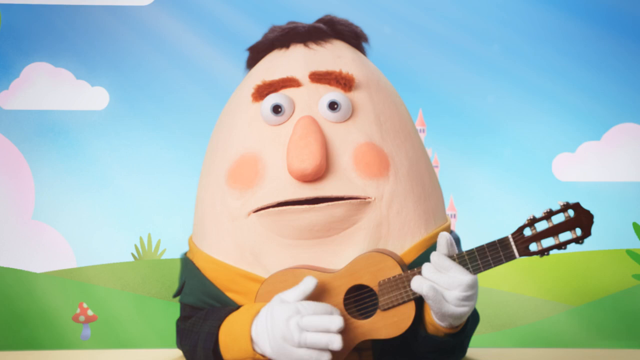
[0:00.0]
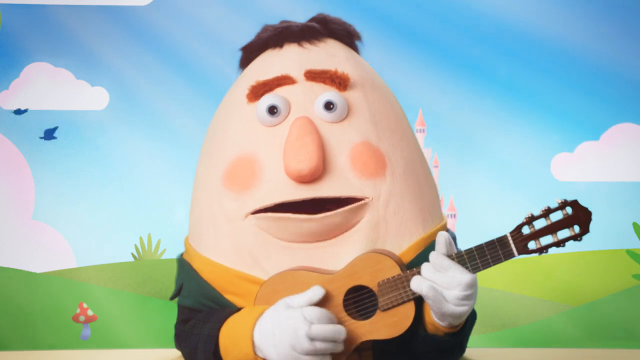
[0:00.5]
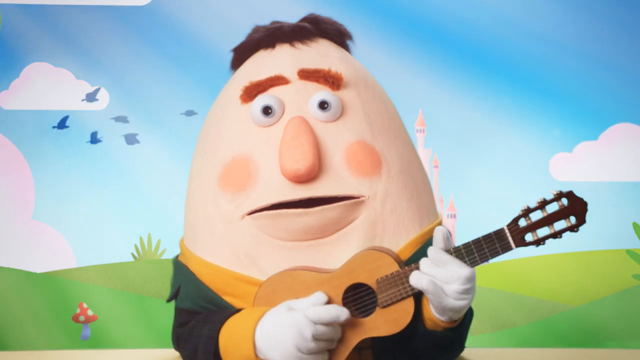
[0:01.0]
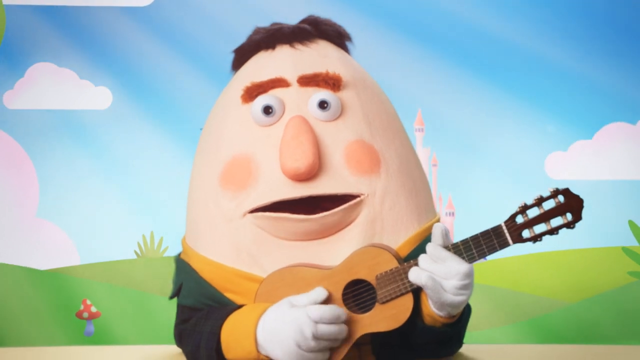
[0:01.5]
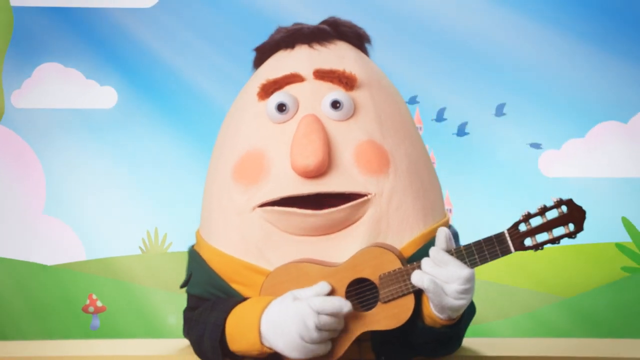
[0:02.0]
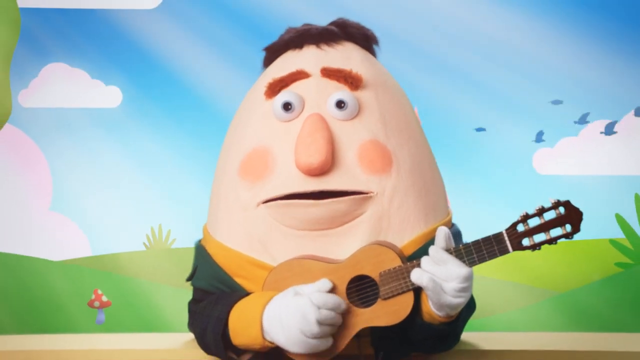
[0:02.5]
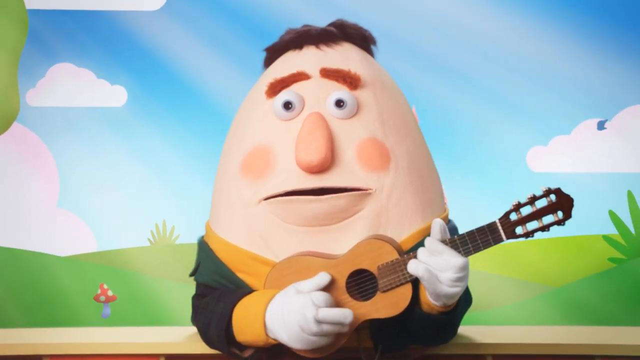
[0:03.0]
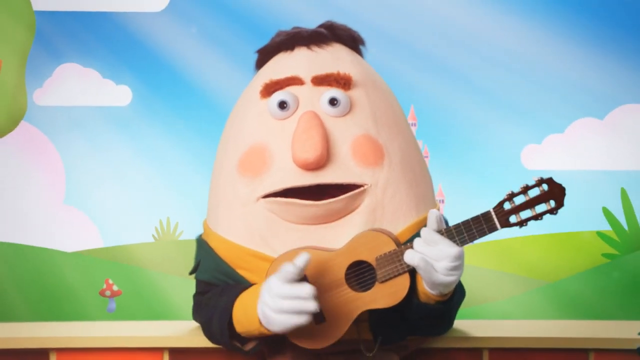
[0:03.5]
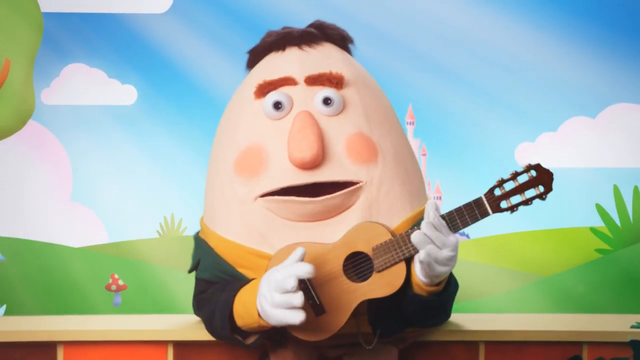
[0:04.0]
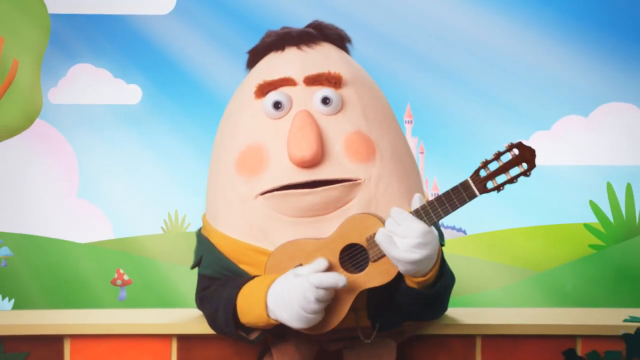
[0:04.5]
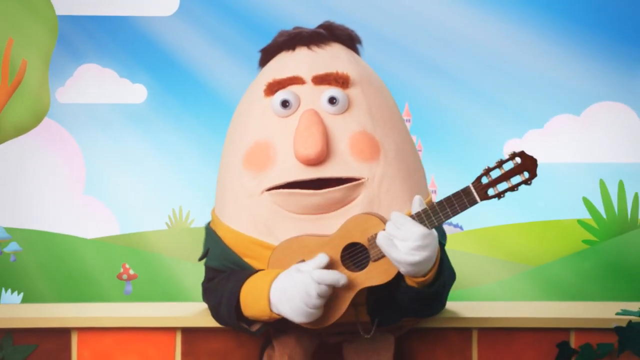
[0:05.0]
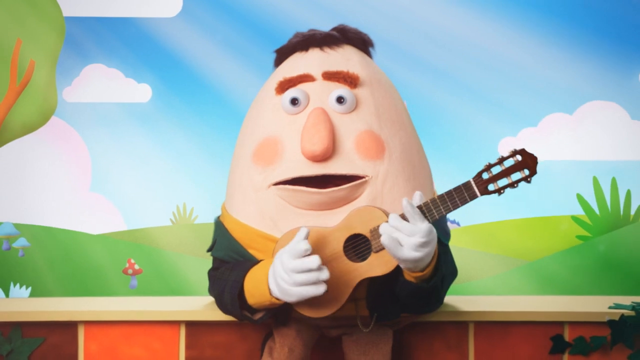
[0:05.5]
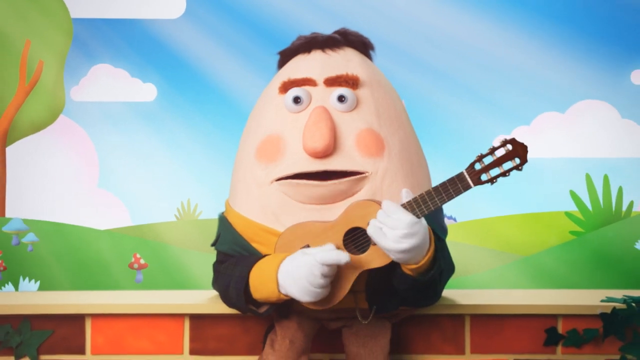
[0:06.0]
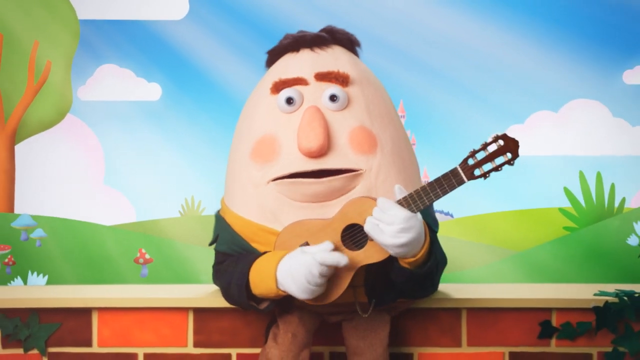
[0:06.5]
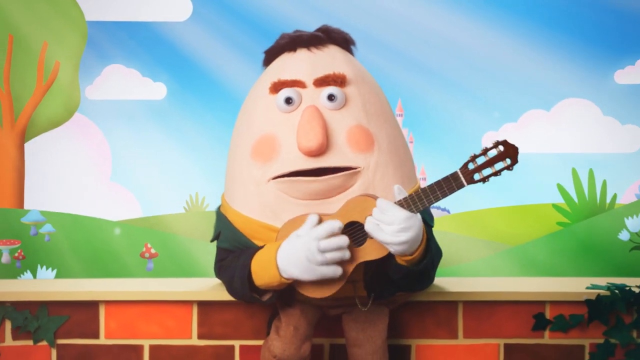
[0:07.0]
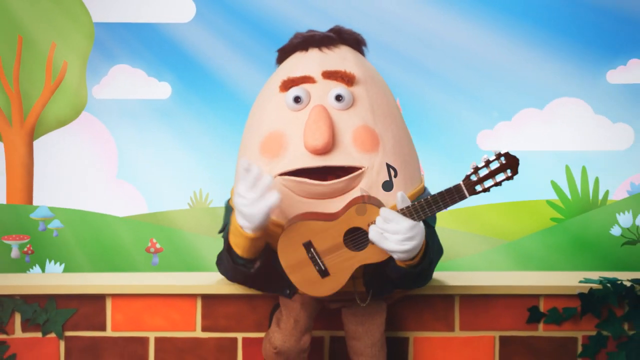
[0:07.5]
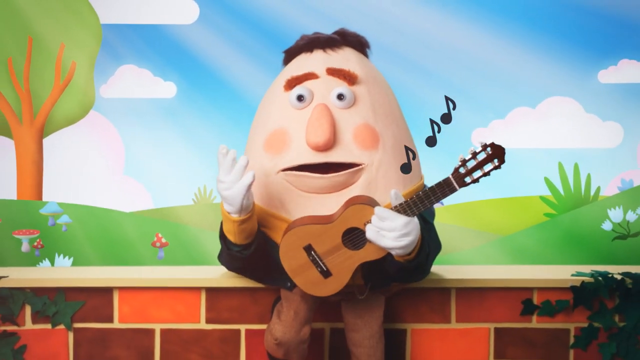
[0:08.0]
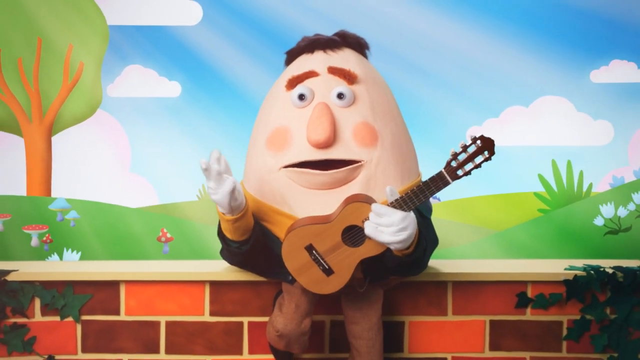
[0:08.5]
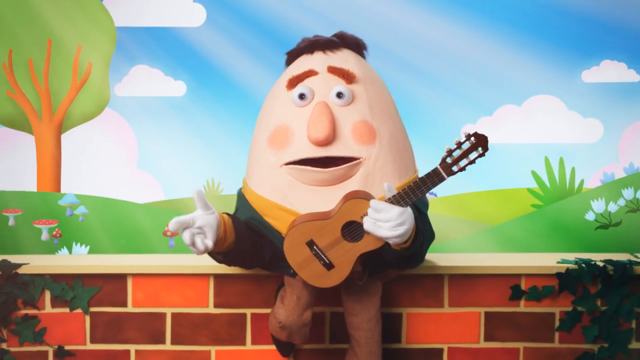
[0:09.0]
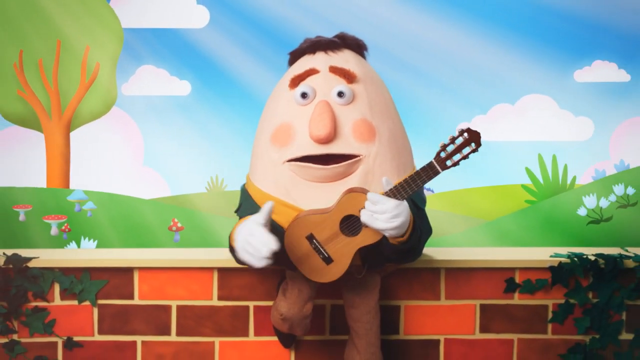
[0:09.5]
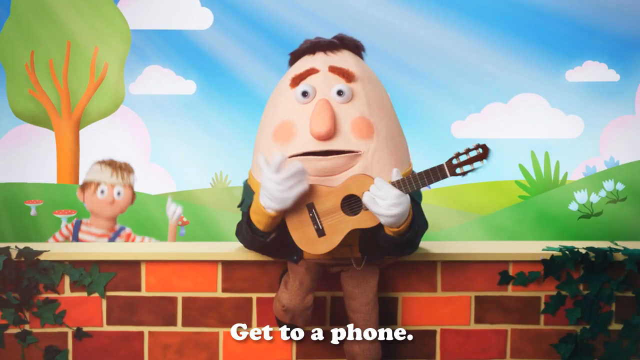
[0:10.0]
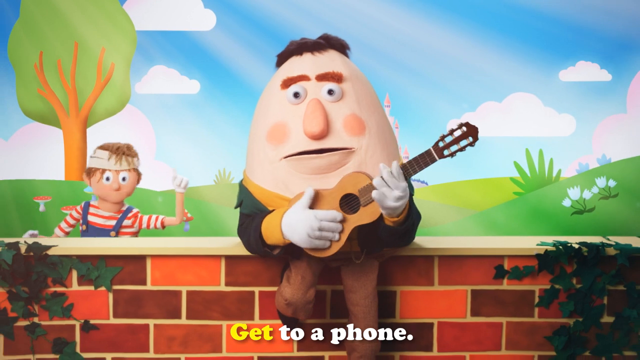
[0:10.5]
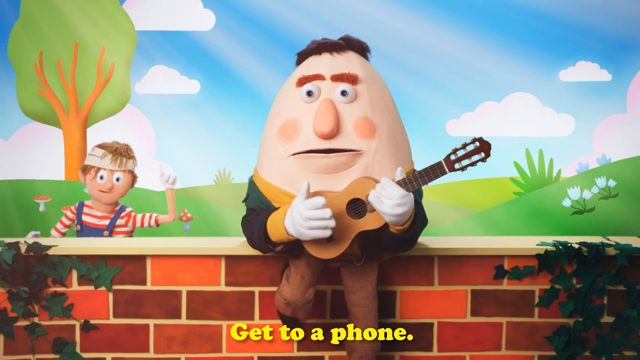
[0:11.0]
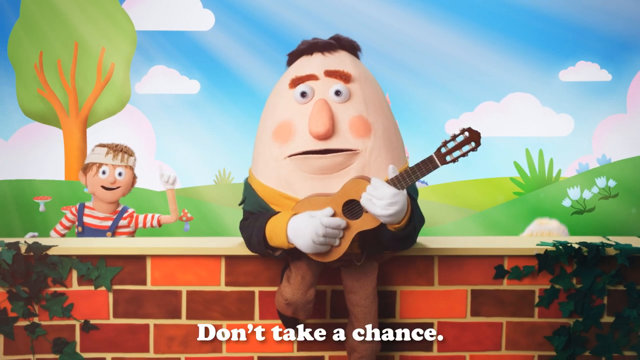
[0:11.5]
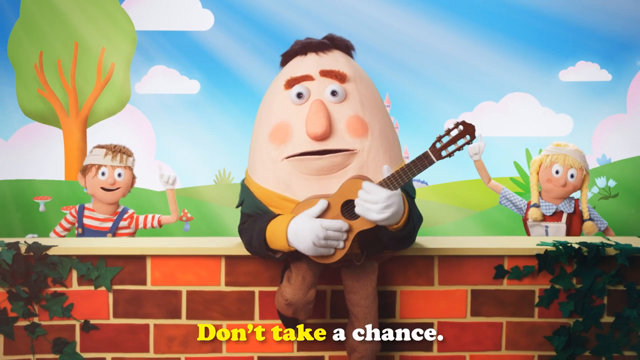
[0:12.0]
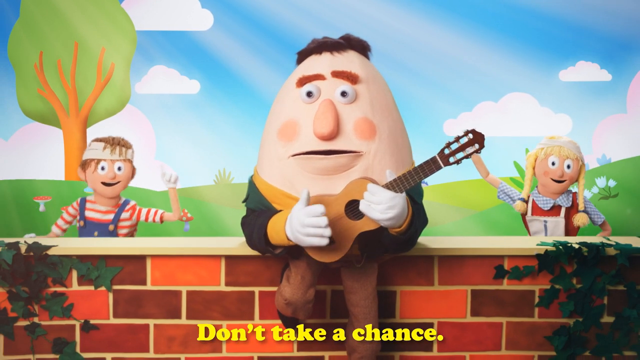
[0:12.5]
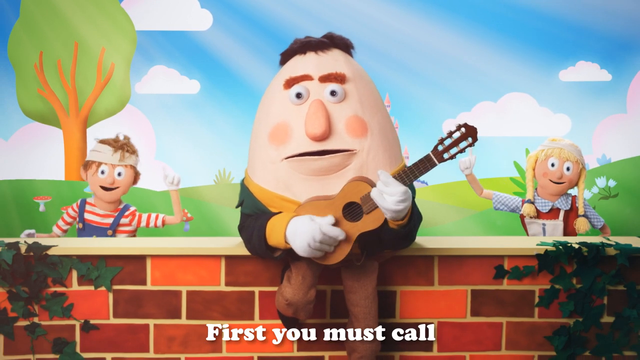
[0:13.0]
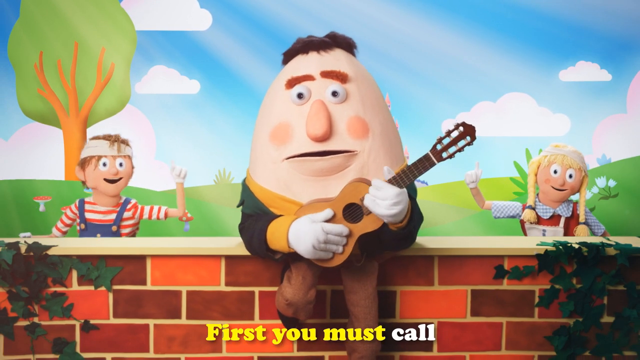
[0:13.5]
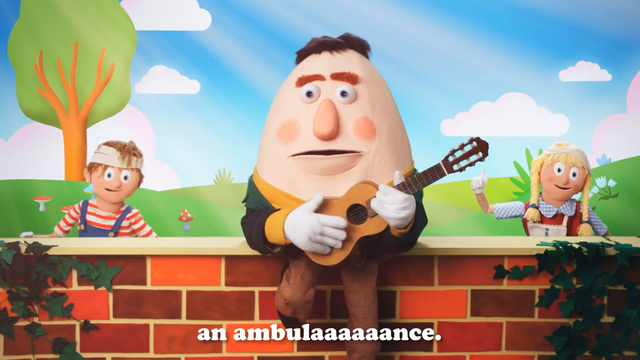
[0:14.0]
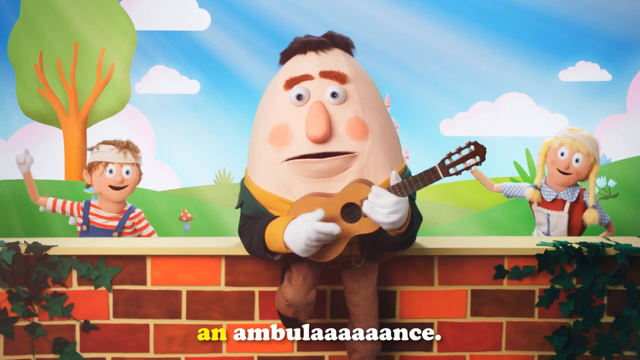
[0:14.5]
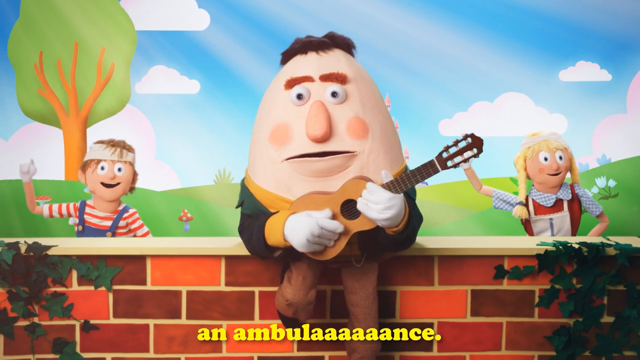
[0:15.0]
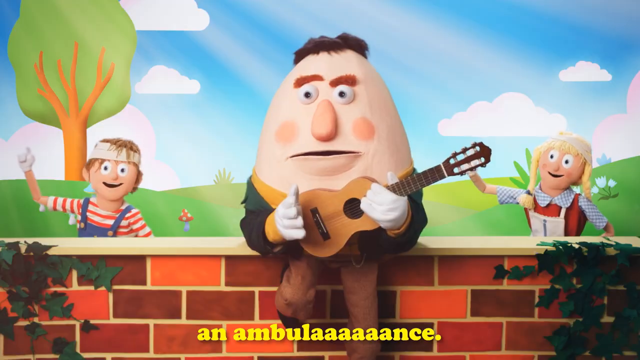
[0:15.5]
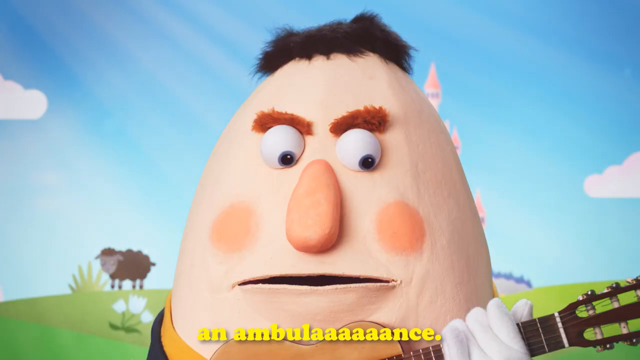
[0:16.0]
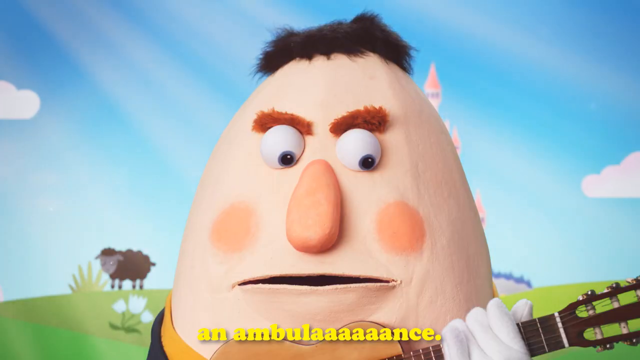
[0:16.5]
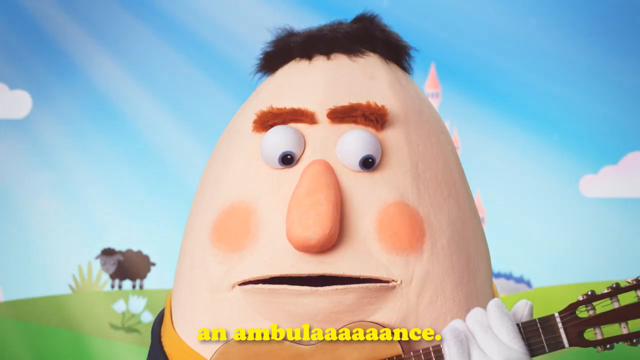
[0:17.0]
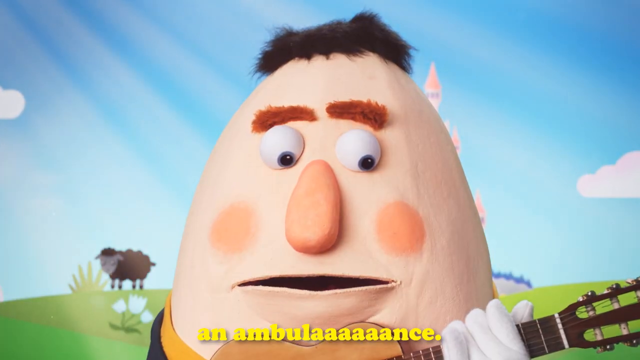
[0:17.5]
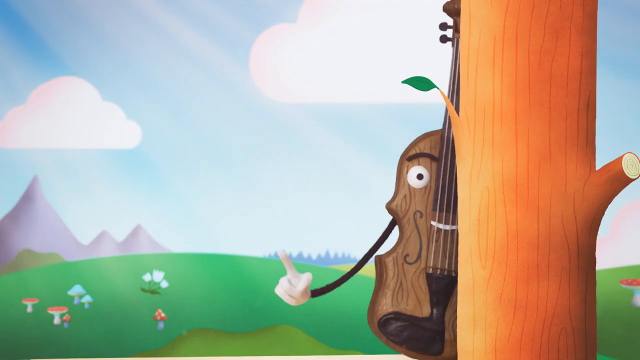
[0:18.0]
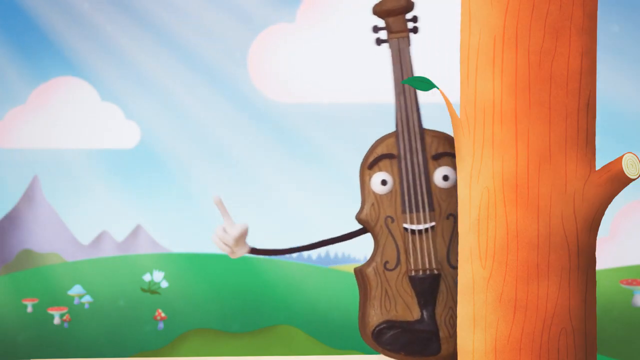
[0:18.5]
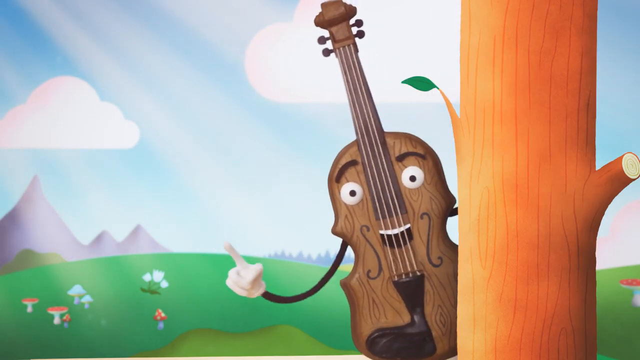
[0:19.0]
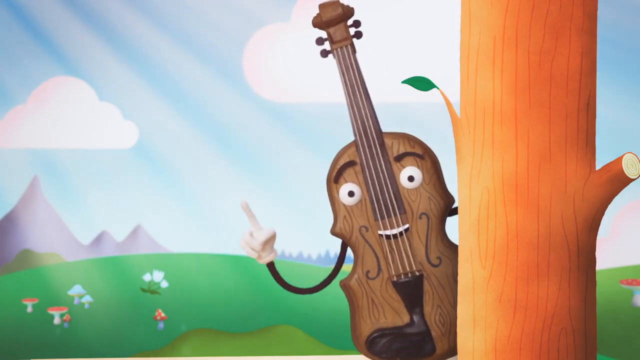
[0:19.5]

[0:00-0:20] An egghead cartoon character, a Humpty Dumpty type with brown eyebrows that move up and down, sings a song while playing what is apparently a ukulele, though it looks more like a guitar because it has six strings and six tuning heads; it could be a six-string ukulele, and it is very tiny. He wears a yellow shirt, some kind of black jacket with a green collar over it, and tan pants, and looks like he is sitting on a brick wall whose top part is stone. The background has a blue sky with white clouds and birds flying by that look blue, along with grass, hills, a tree, mushrooms and white flowers. Someone in a red and white shirt pops up on the left and a girl pops up on the right; they resemble Hansel and Gretel. A violin pokes out from behind a tree. The words of the song appear on the screen: "Get to a phone. Don't take a chance first you must call an ambulance".